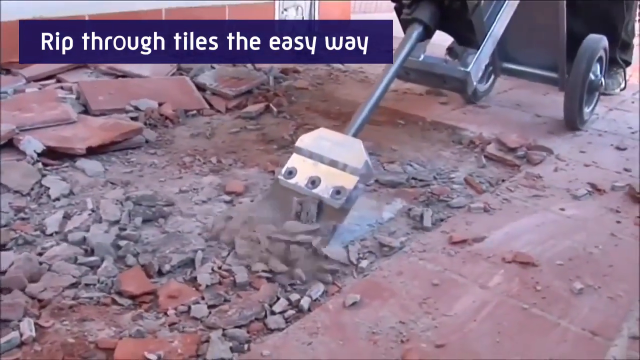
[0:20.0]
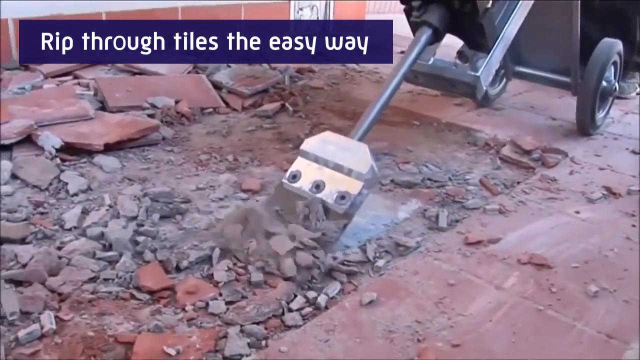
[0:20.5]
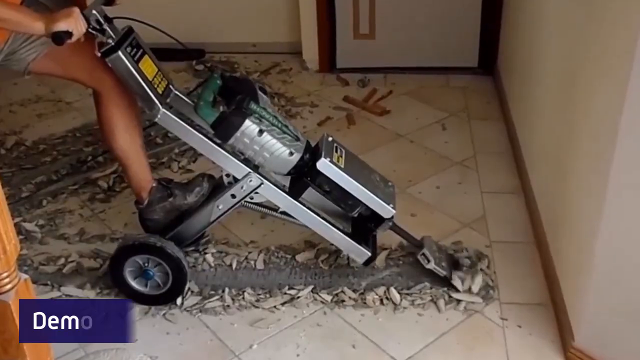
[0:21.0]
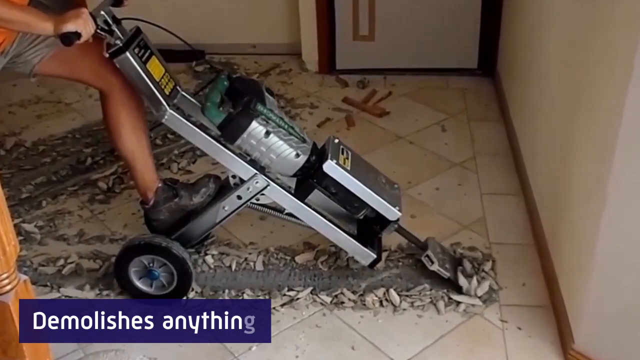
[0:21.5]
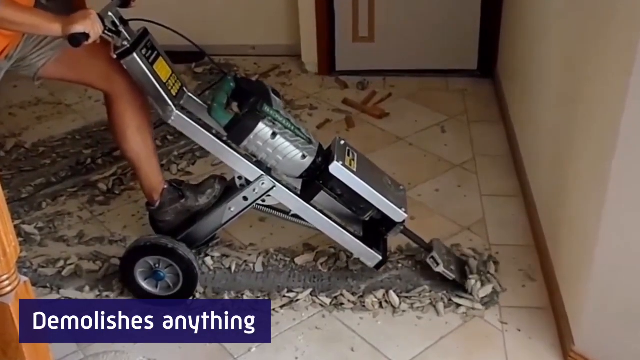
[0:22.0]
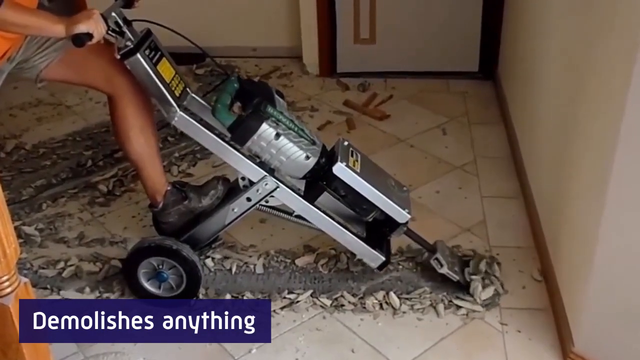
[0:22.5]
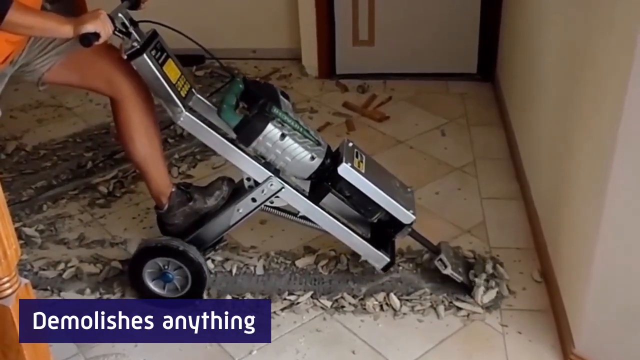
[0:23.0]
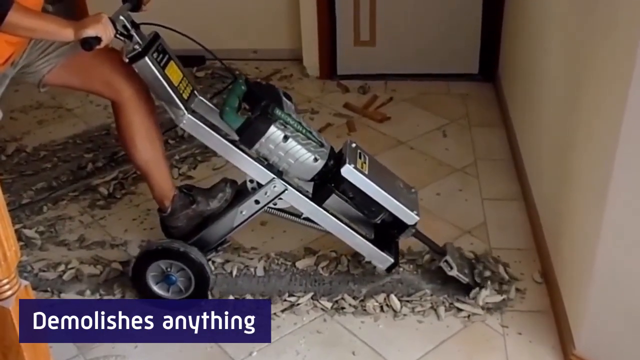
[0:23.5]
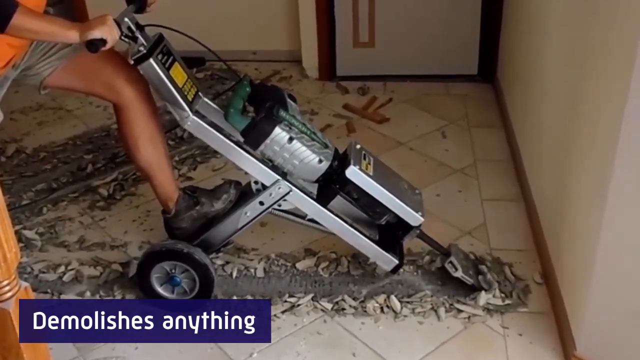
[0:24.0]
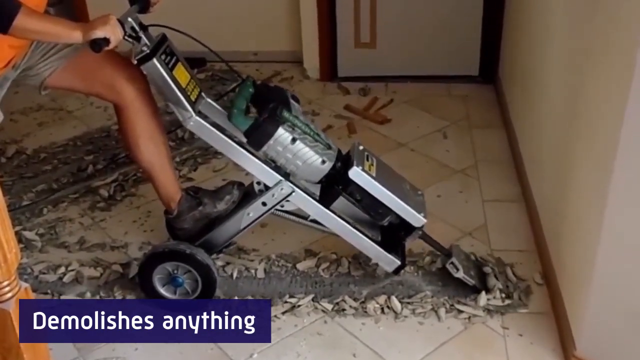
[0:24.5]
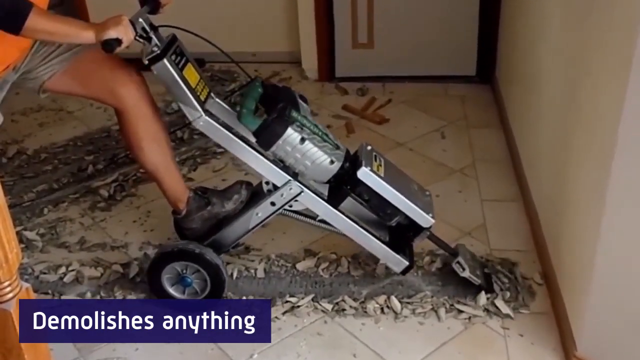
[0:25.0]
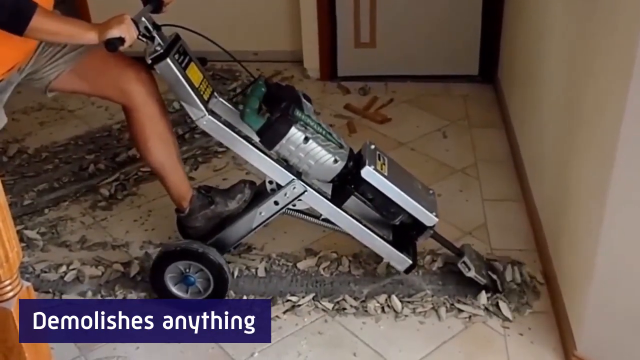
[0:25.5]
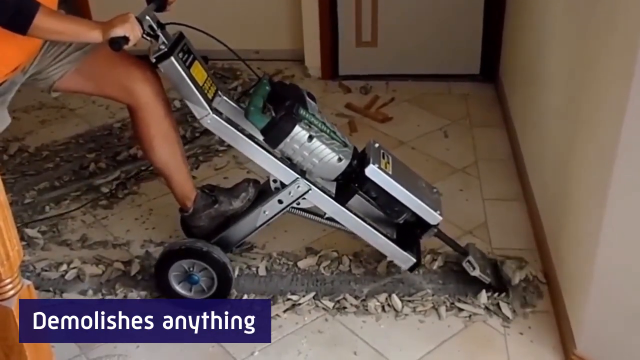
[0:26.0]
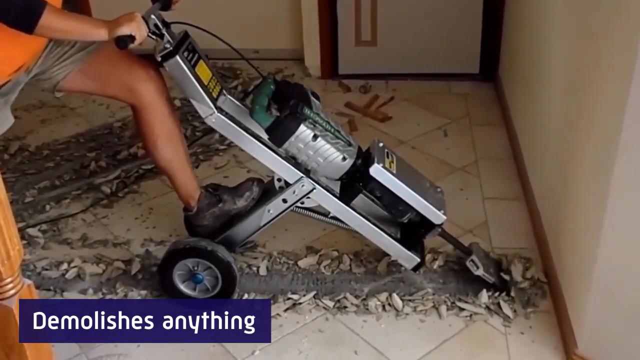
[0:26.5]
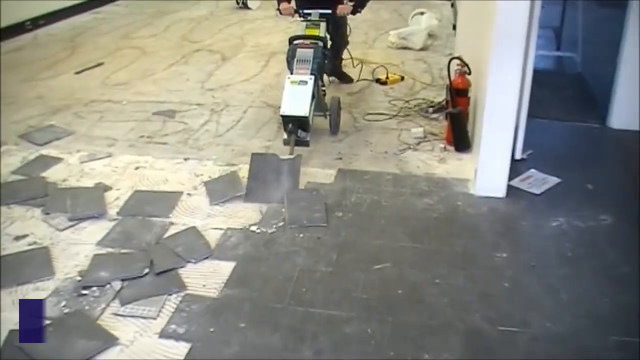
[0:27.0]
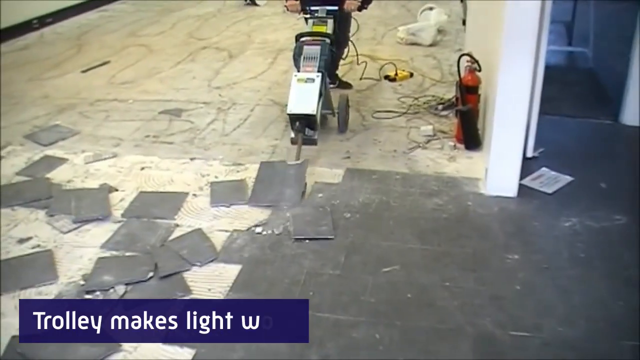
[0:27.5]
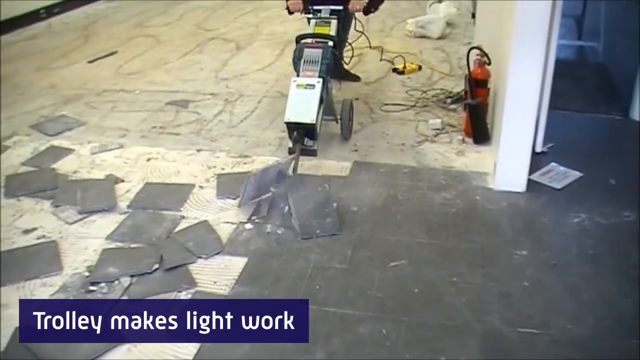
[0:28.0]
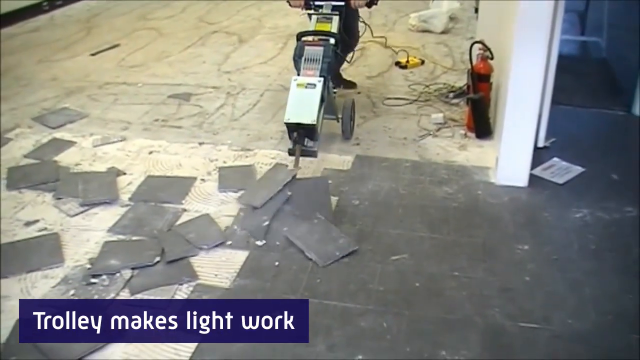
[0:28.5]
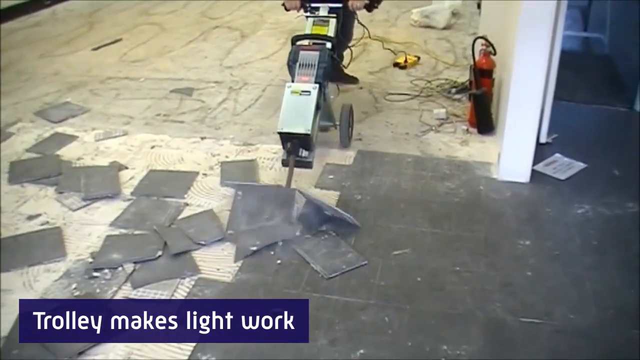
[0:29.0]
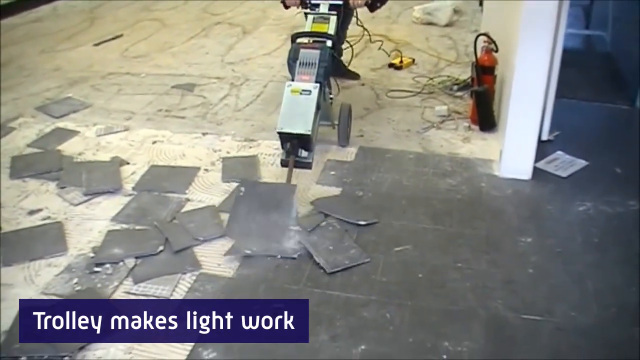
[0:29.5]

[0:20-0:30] Men remove tiles and demolish the floor, with a trolley machine ripping through the tiles neatly. The floor has brown tiles, and a man pushes the trolley; one foot is lifted and pressed on the machine as it moves. He wears a black shoe, gray pants and an orange and black t-shirt, and handles the trolley machine with both hands. The walls of the room are cream, and the tiles are cream as well; he appears to be inside a room, removing the tiles with the machine. Outside, there are cream tiles, and a person is drilling the ground to remove them.